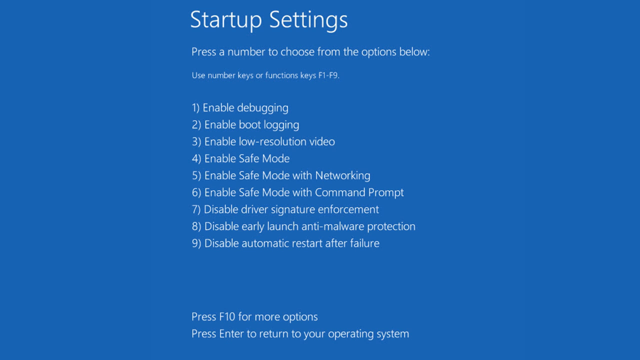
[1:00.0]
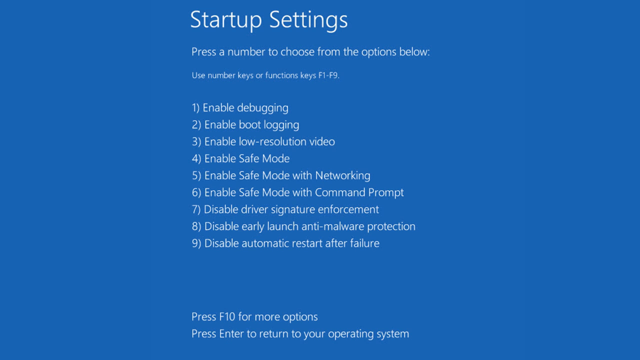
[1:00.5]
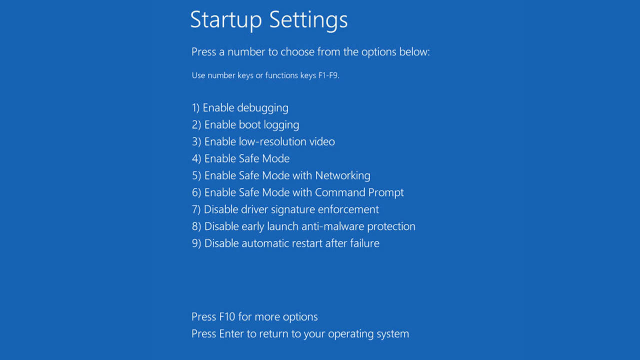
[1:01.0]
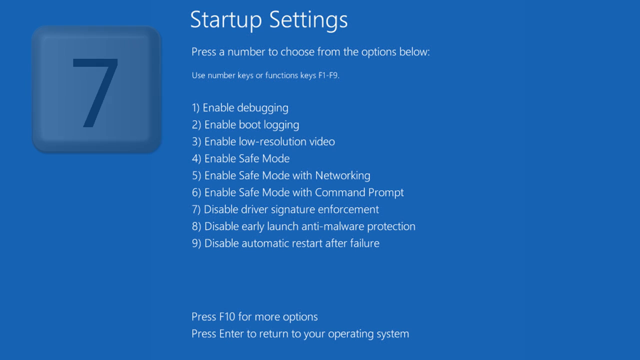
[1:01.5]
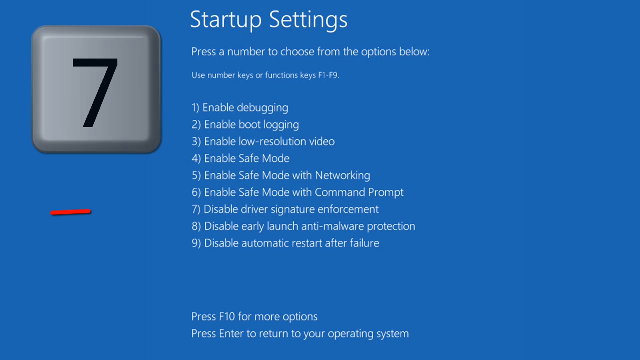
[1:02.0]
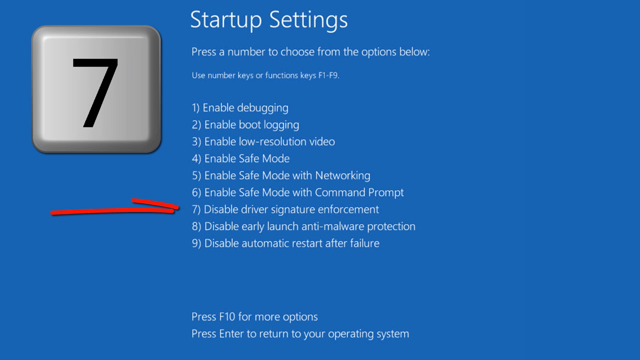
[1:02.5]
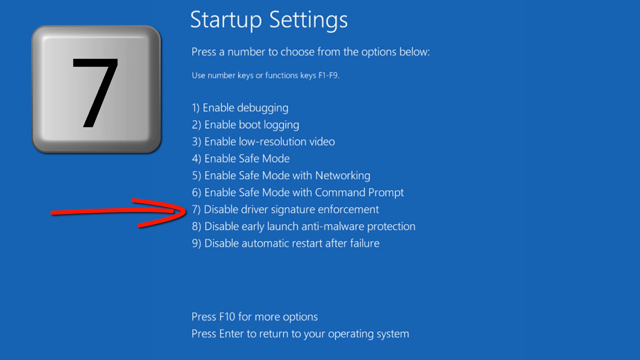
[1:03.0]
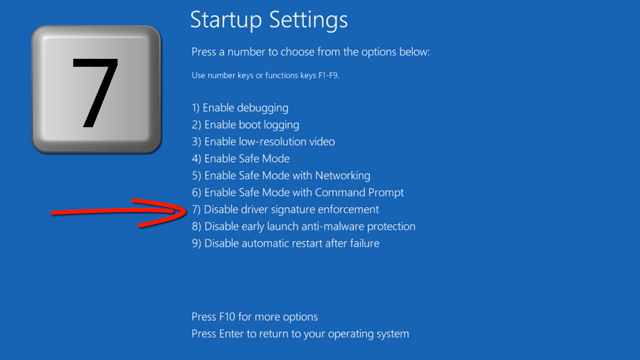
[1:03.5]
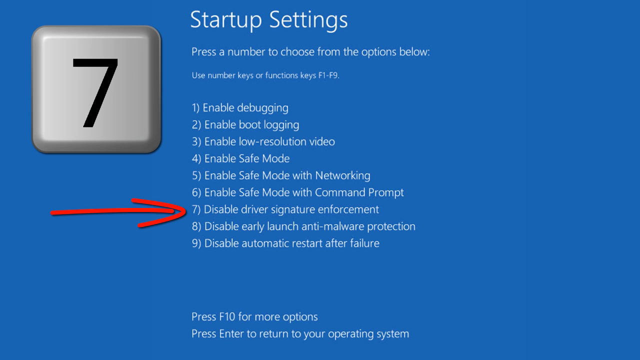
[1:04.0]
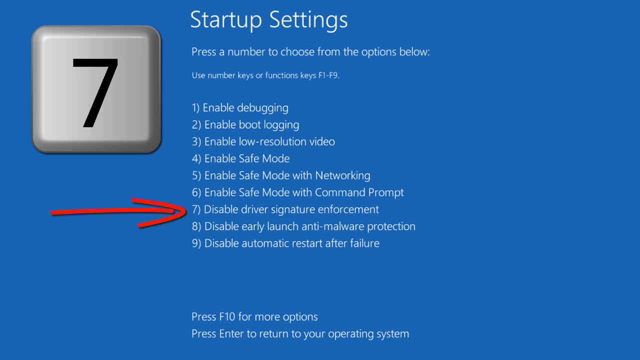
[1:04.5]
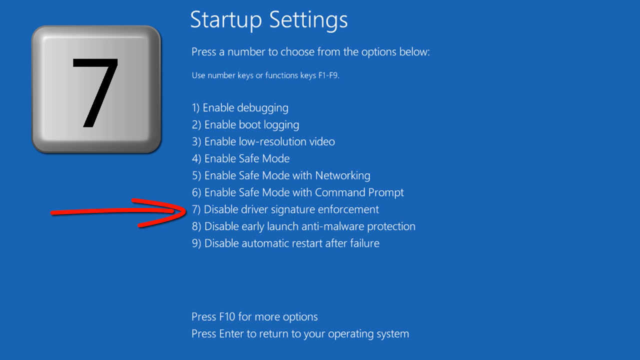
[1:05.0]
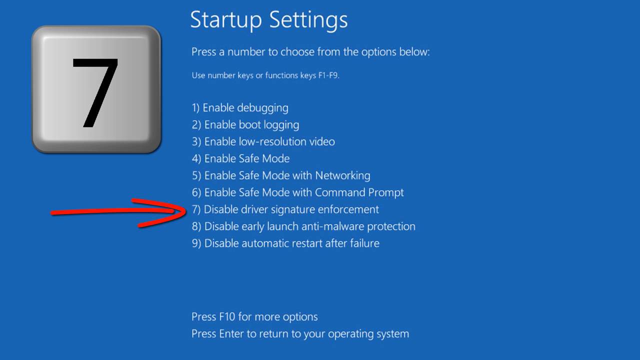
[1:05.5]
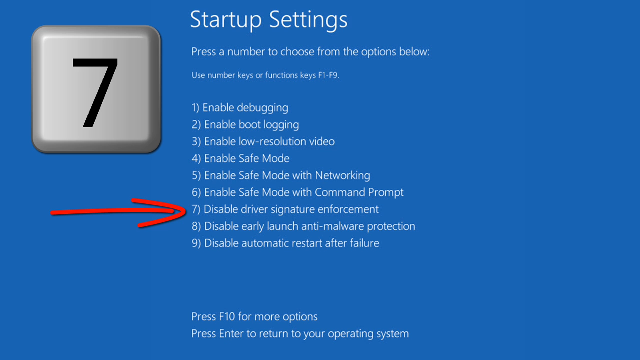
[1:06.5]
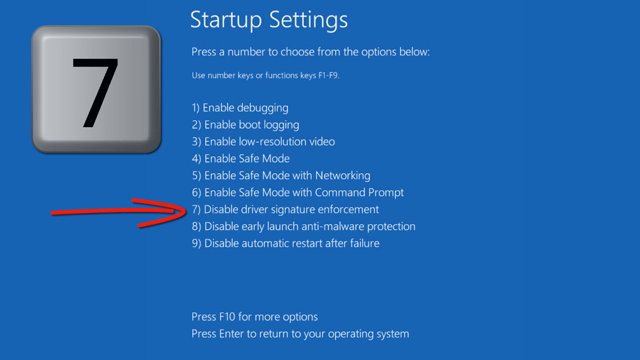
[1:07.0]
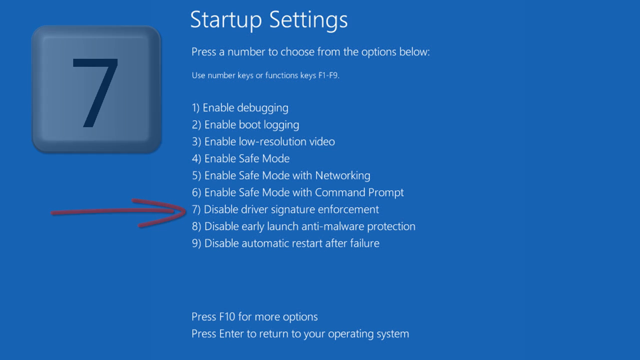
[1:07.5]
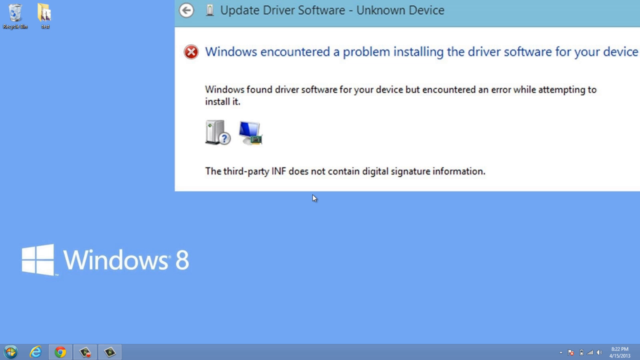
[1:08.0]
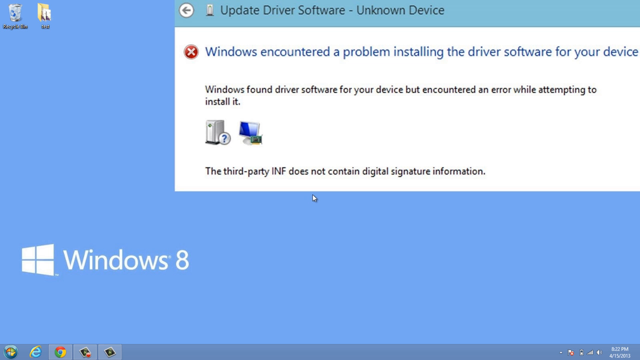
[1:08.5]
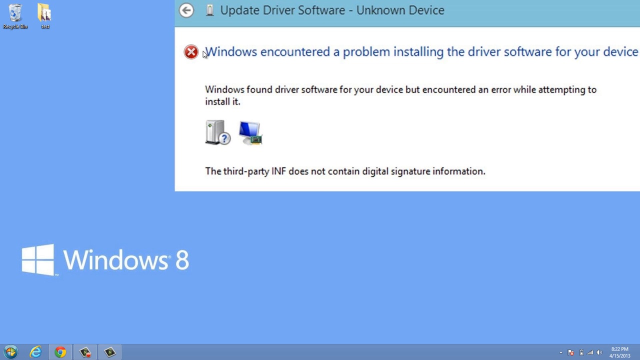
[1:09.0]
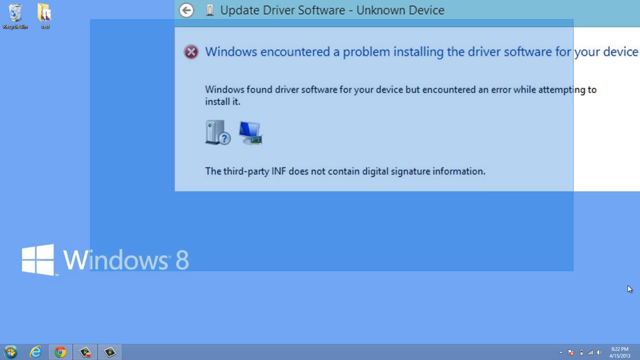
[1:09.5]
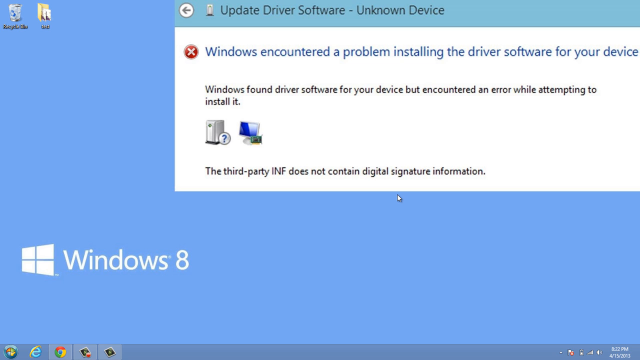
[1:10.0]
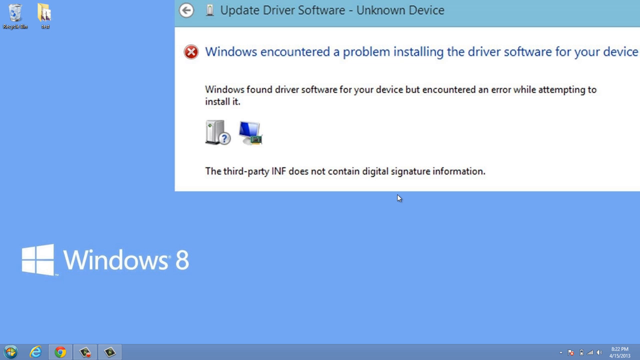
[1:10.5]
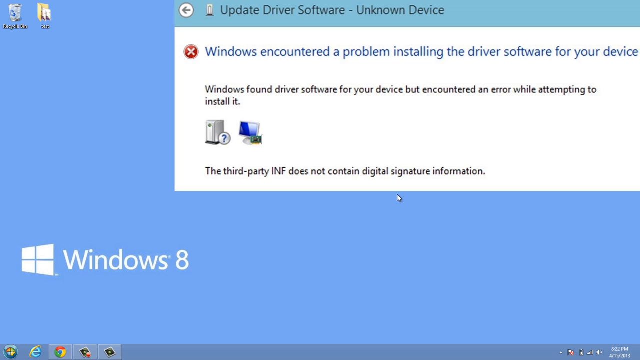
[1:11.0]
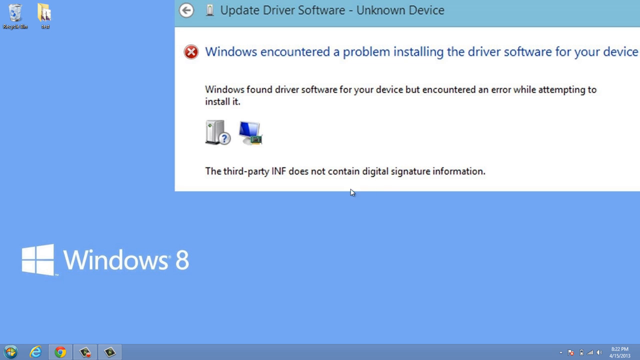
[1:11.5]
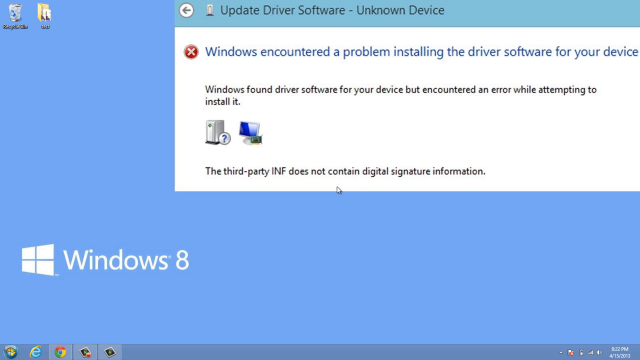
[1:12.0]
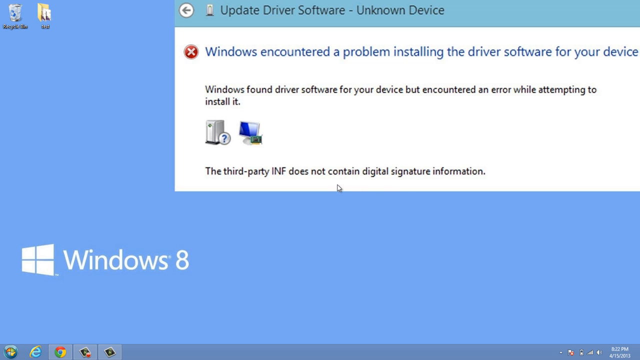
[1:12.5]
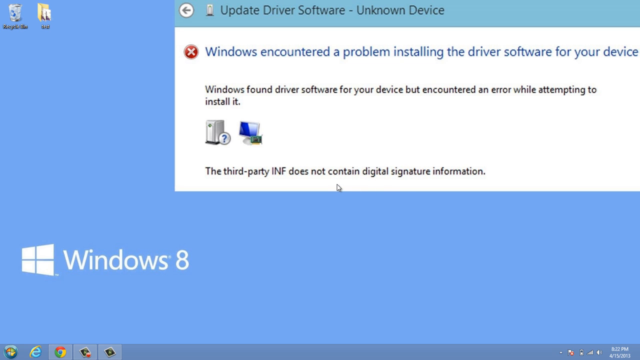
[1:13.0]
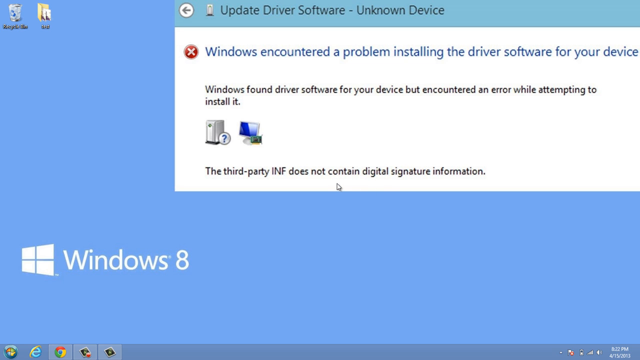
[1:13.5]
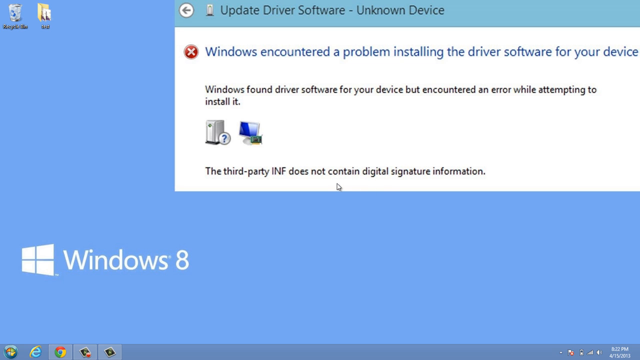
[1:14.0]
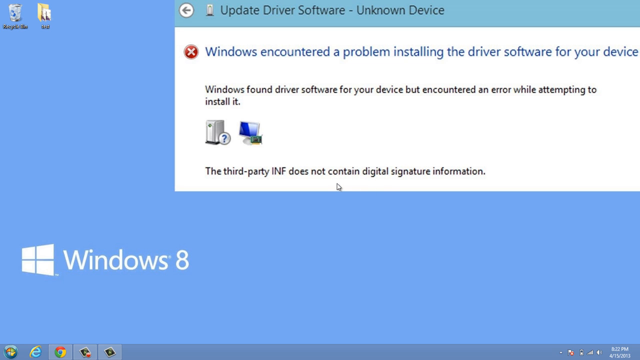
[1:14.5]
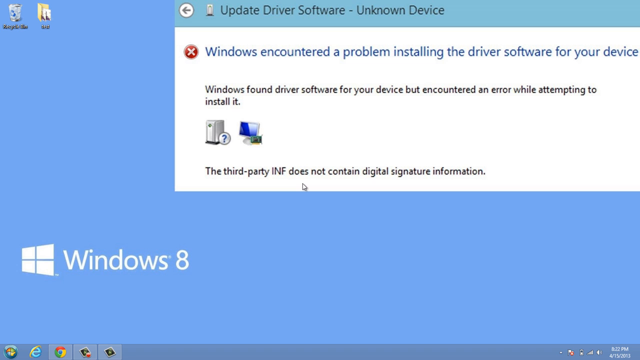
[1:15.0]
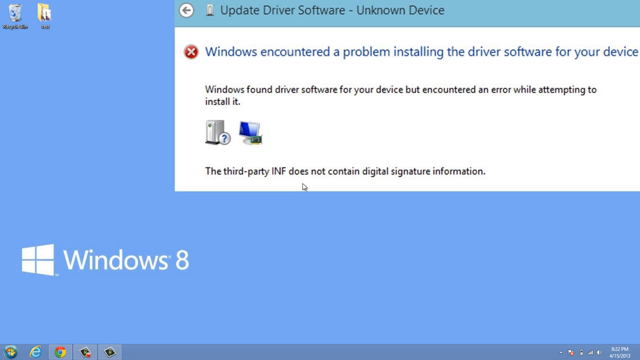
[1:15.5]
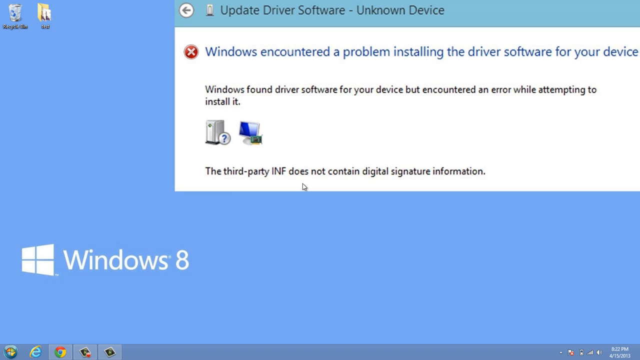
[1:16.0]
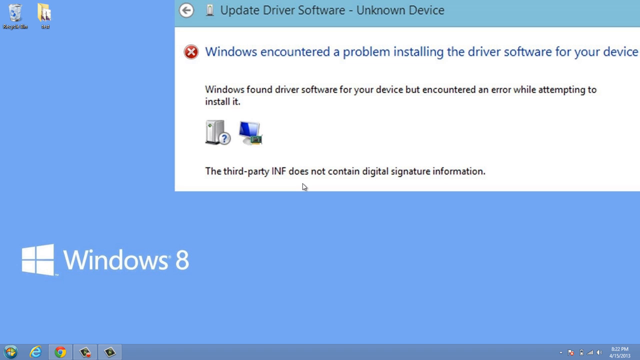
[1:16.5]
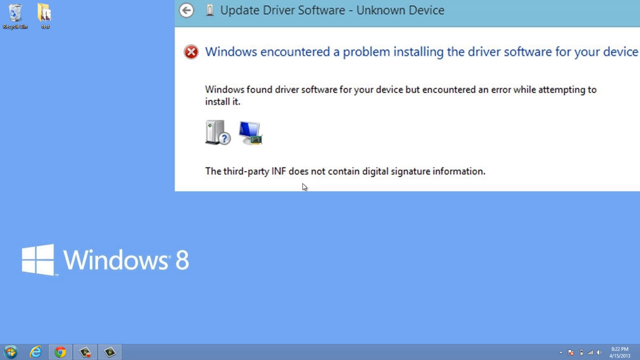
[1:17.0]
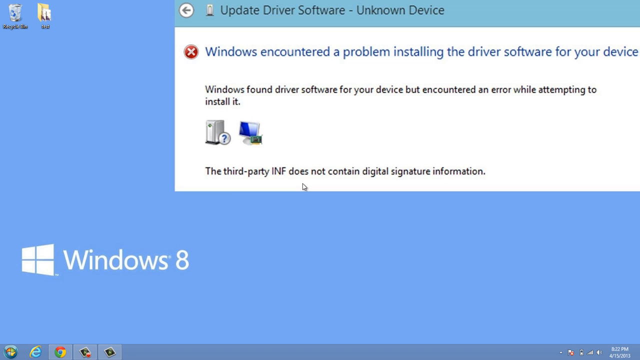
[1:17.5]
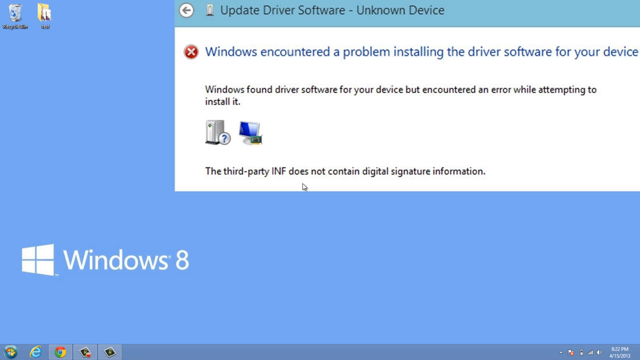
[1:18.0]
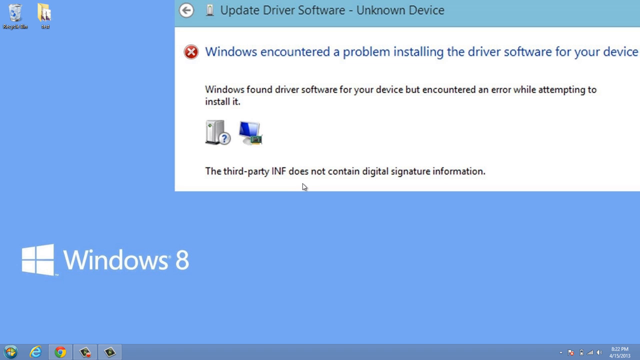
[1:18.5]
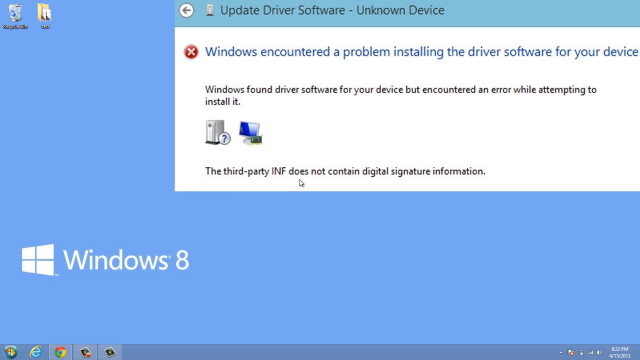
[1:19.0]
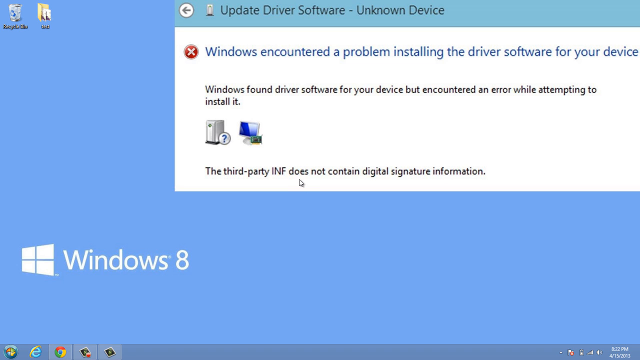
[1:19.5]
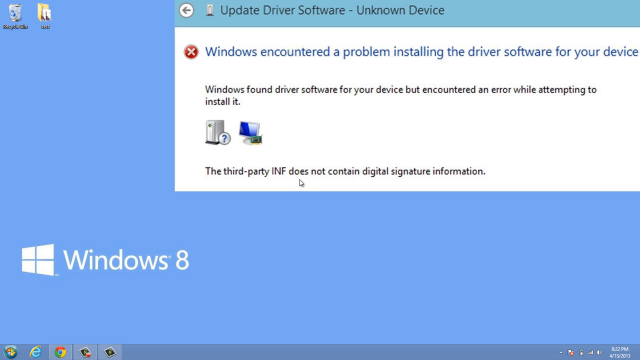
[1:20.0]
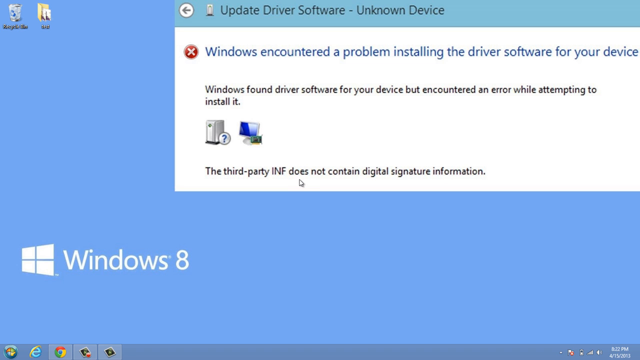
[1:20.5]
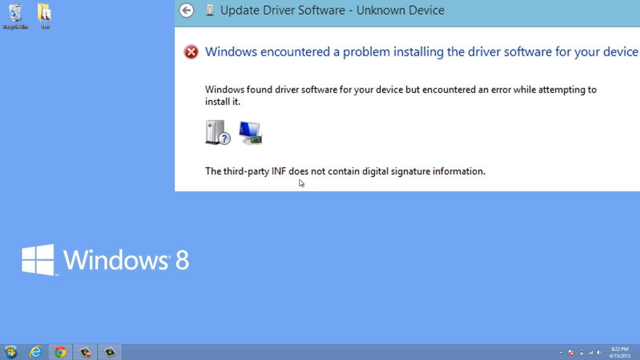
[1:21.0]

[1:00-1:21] The startup settings screen shows a list of options beneath the heading, with the text "press a number to choose from the options below." The options include enable debugging, enable boot logging, enable safe mode, enable safe mode with command prompt, and disable driver. A red arrow points to one of the options, apparently disable driver. After that page, the startup settings screen appears again.